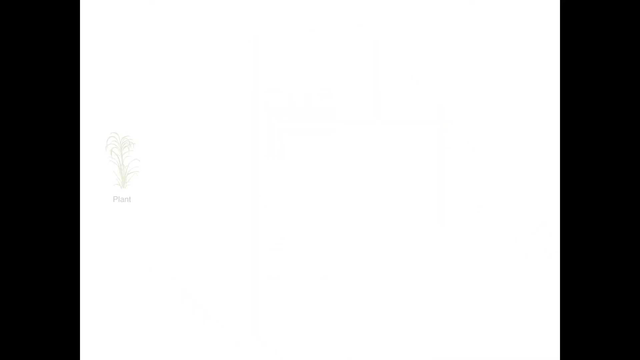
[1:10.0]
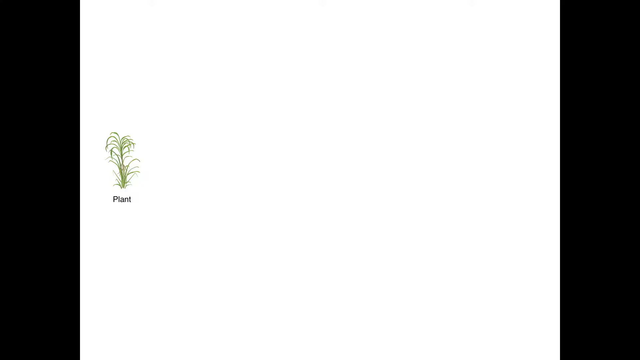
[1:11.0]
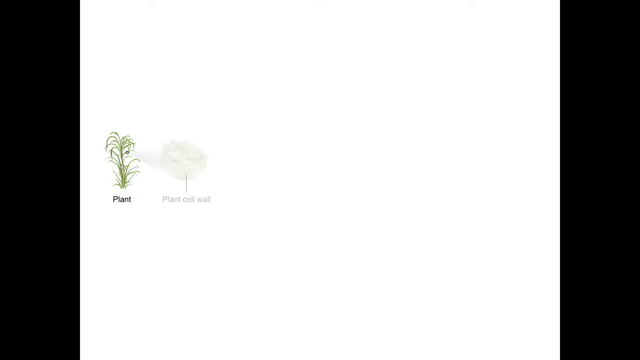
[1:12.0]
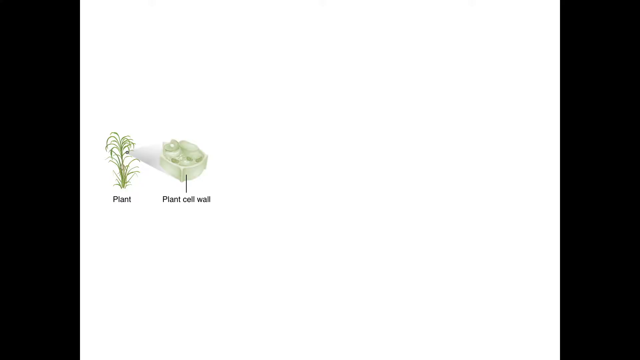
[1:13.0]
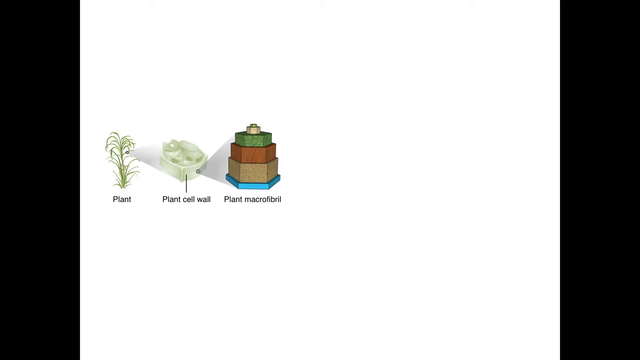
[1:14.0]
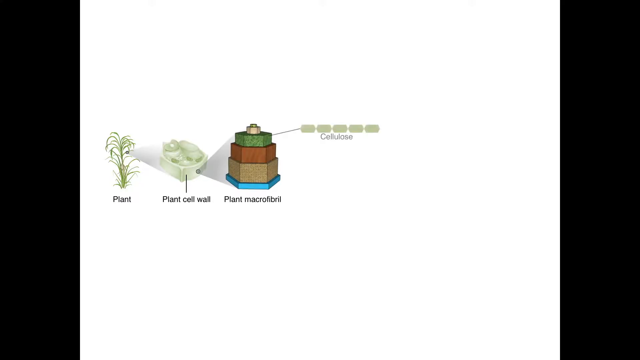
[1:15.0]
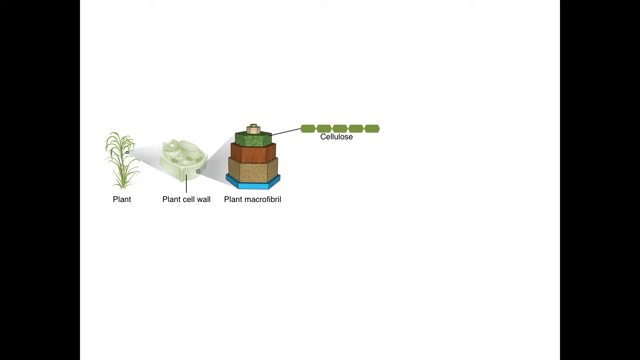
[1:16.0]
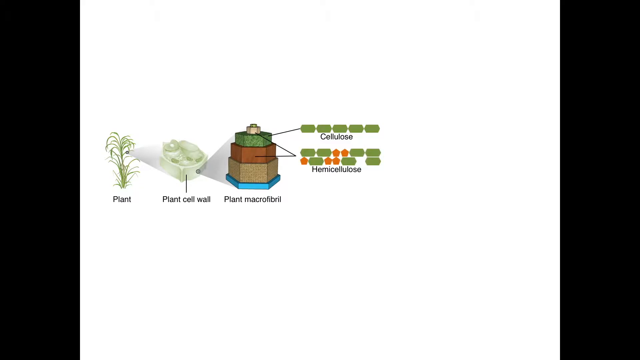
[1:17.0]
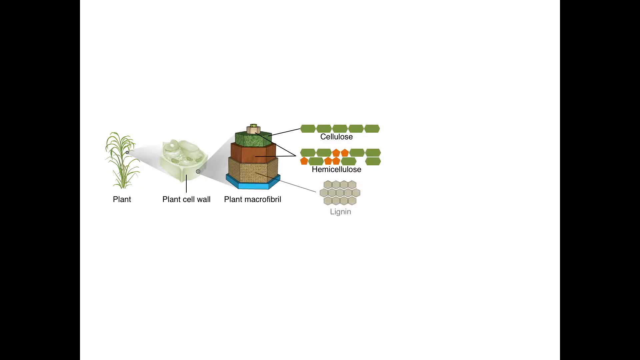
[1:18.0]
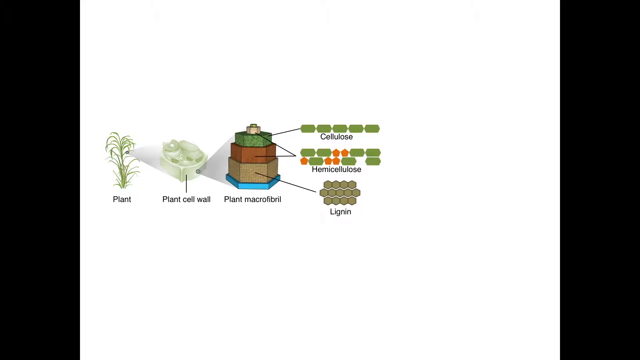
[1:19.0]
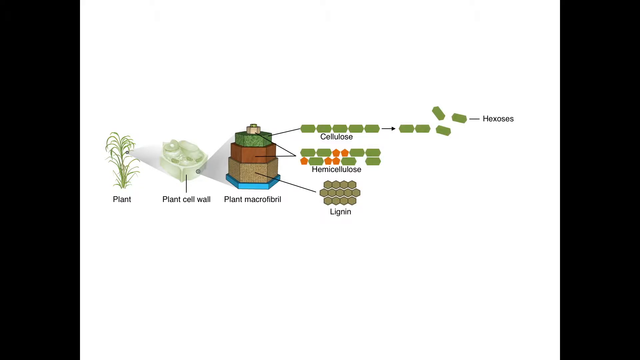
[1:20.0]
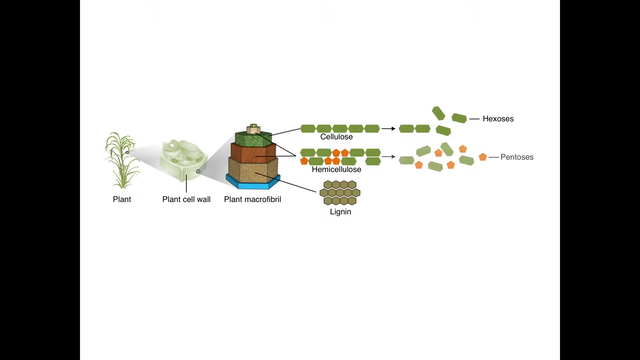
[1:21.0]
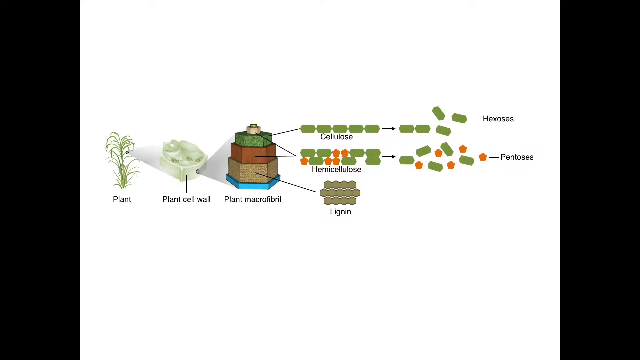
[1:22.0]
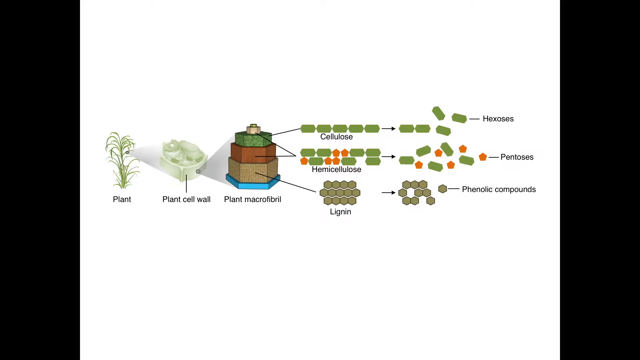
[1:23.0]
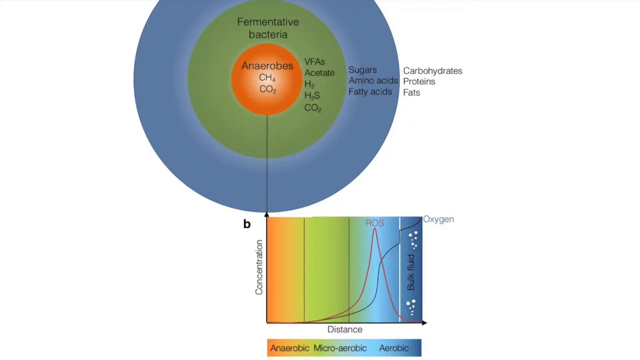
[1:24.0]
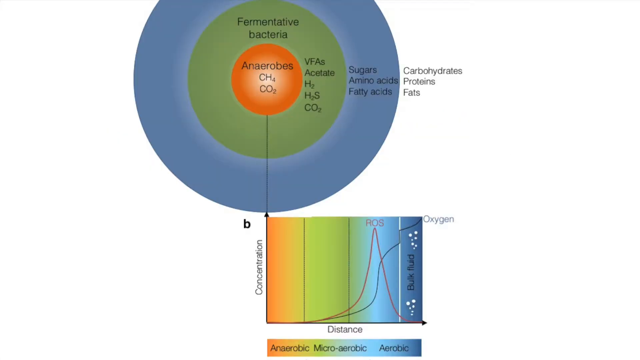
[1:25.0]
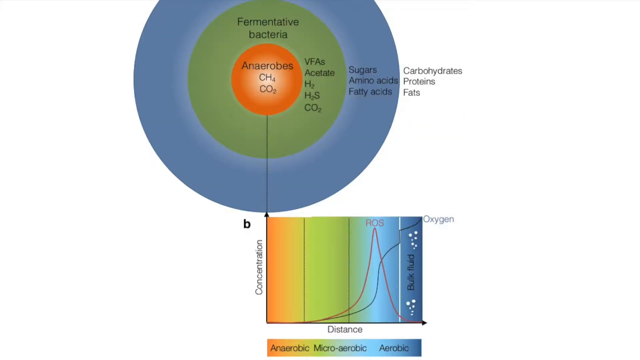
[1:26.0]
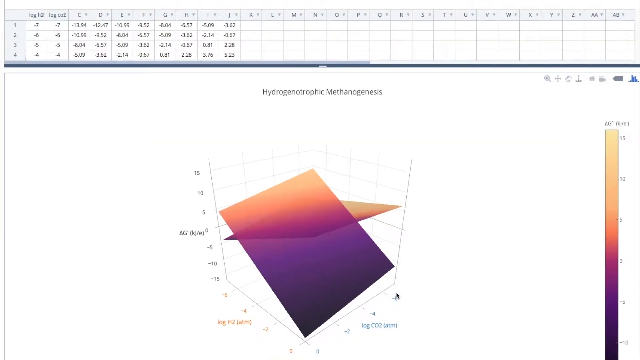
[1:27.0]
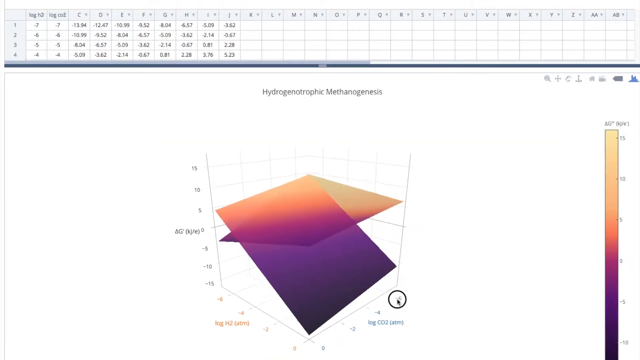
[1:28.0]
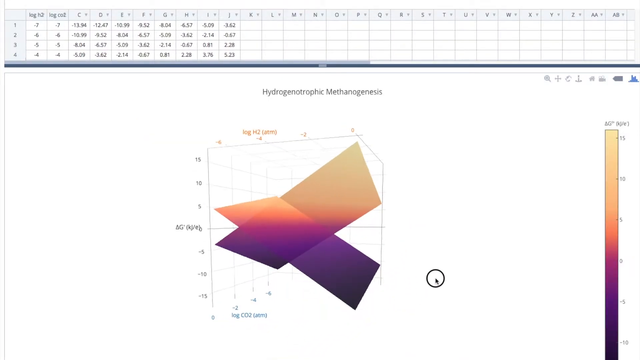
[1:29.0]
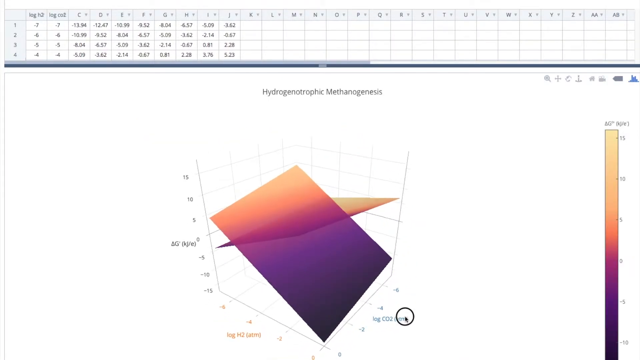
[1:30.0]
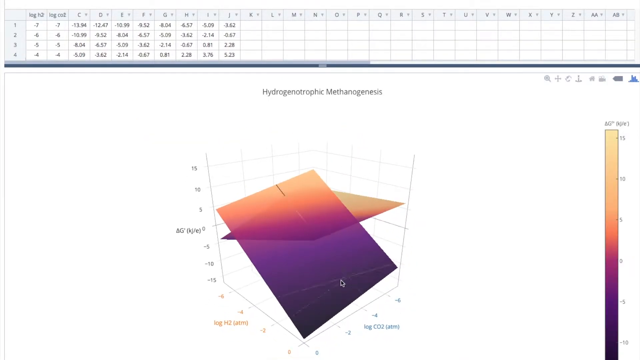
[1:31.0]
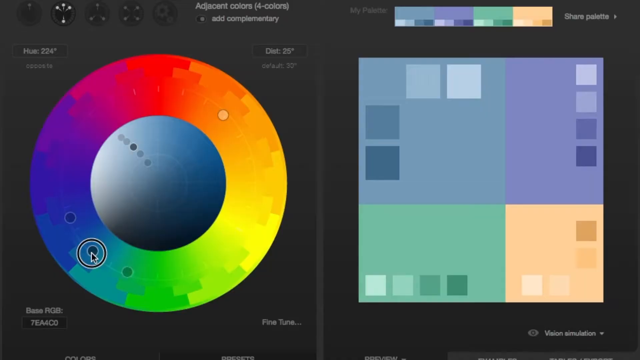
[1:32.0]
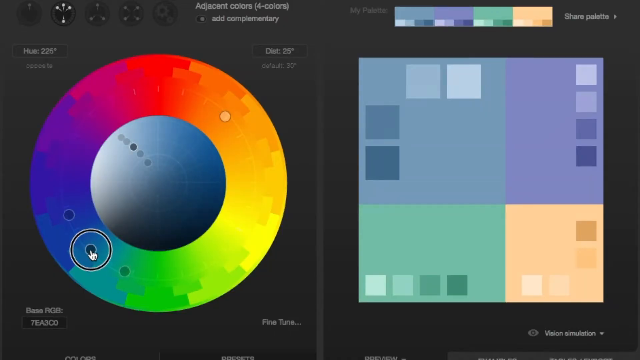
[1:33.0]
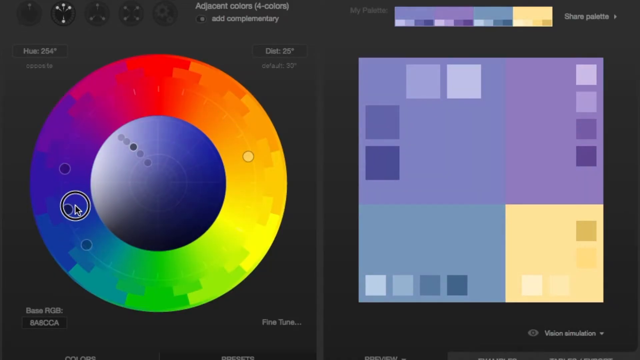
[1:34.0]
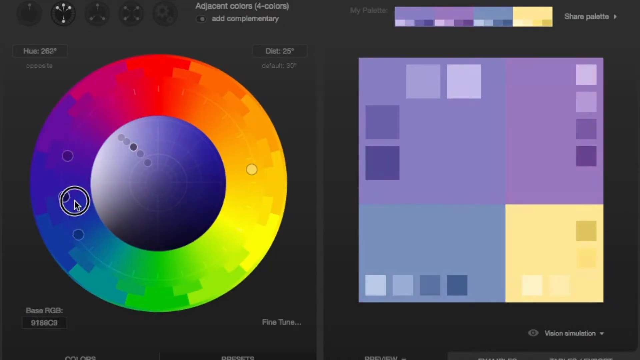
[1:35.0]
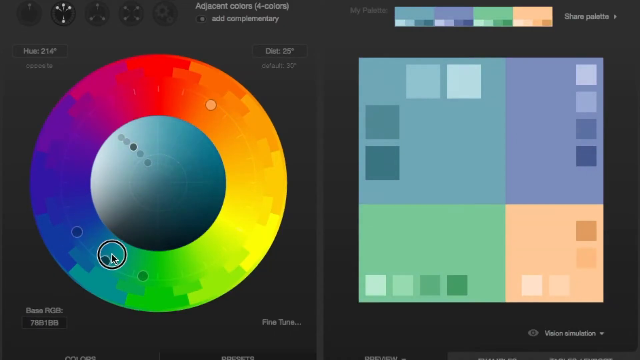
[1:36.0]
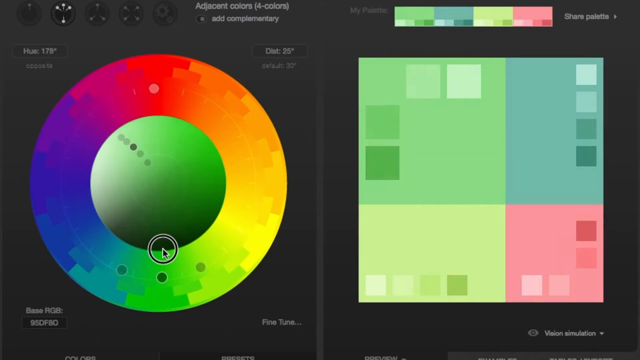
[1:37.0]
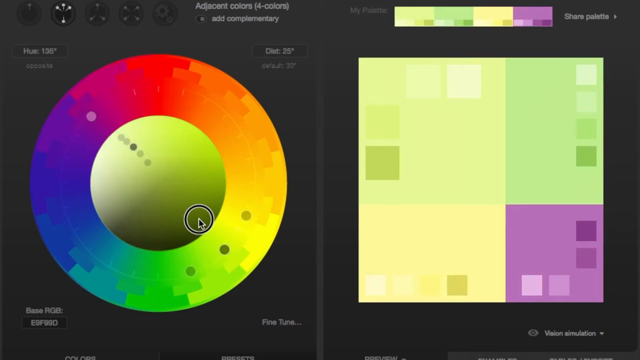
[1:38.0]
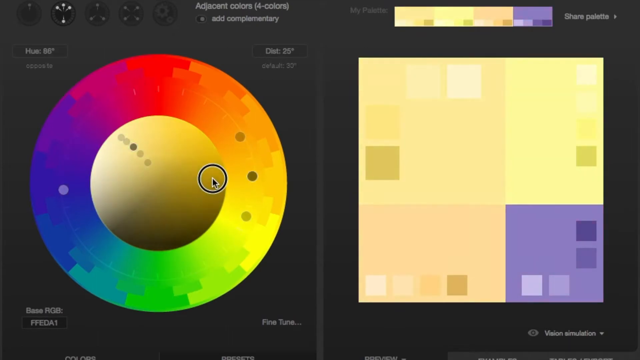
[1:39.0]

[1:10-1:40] On a white screen, an image of a plant suddenly appears in the middle left portion of the screen. The plant is a green flower, and beneath it the word "plant" is written in black. Next to it is an image of a plant cell wall, with a black line and the words "plant cell wall" beneath. Next to this is an image of a plant macrofibril, designed in a pyramid shape, with the words "plant macrofibril" underneath. Next come an image for cellulose and an image for hemicellulose, with an image for lignin beneath. Then there is an image for hexoses, with an image for pentoses beneath, followed by an image for phenotic compounds. A graph then appears, made up of lavender, army green and orange areas: the lavender area is the sugar, amino acids and fatty acids, the green area is the fermentative bacteria, and the orange section is the anaerobes.